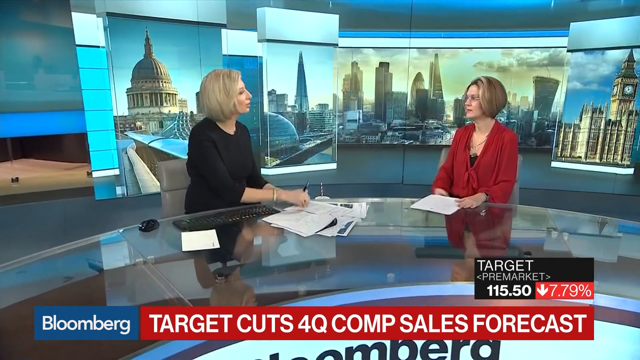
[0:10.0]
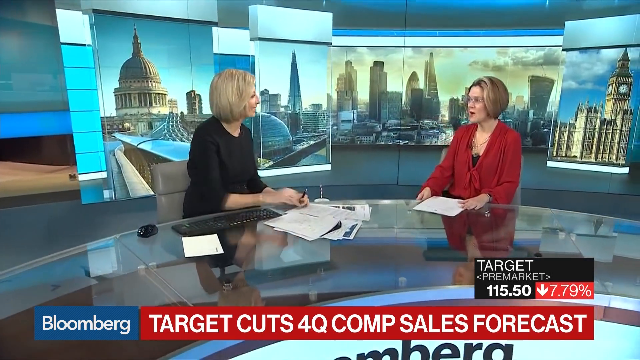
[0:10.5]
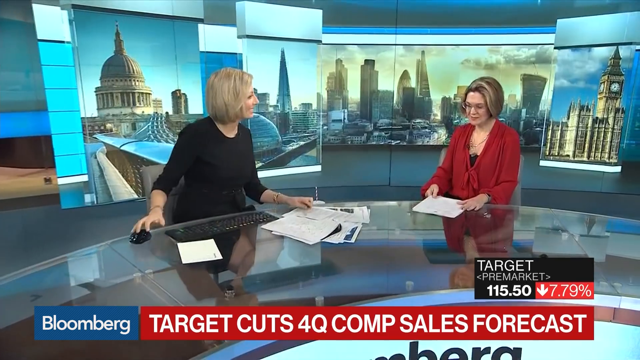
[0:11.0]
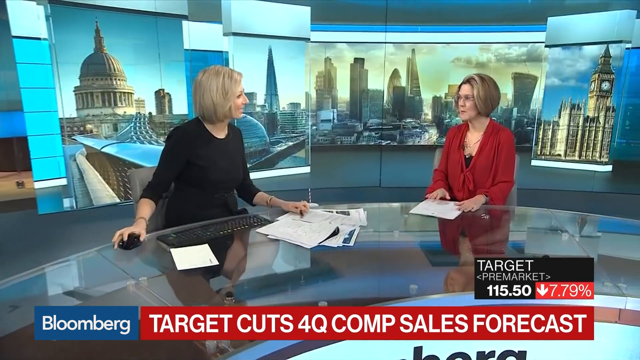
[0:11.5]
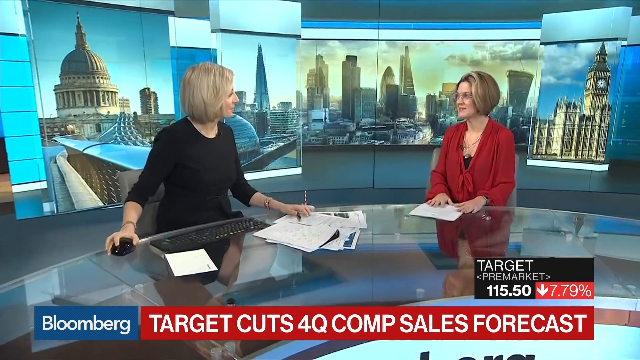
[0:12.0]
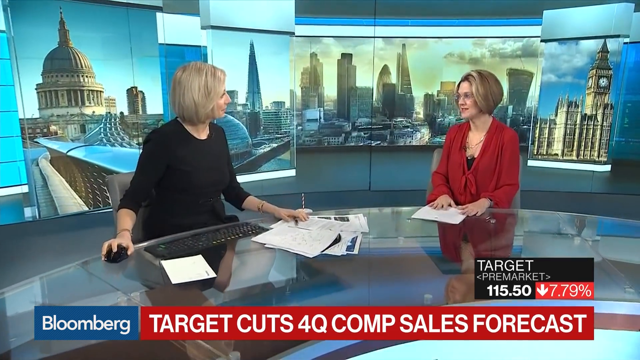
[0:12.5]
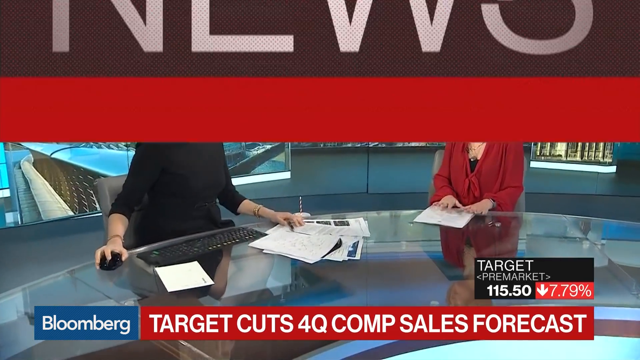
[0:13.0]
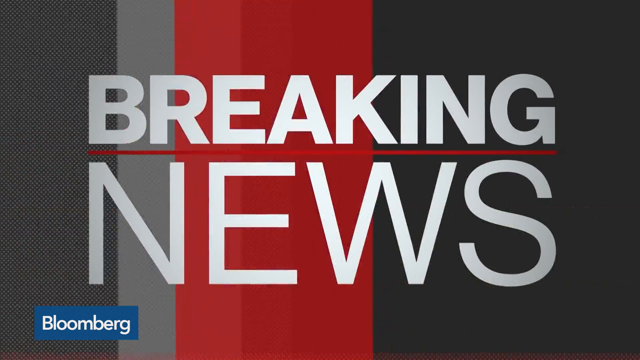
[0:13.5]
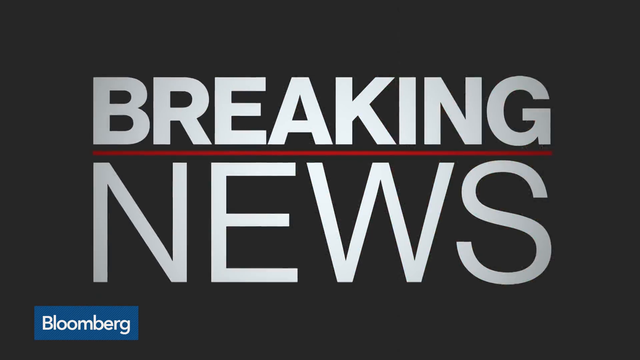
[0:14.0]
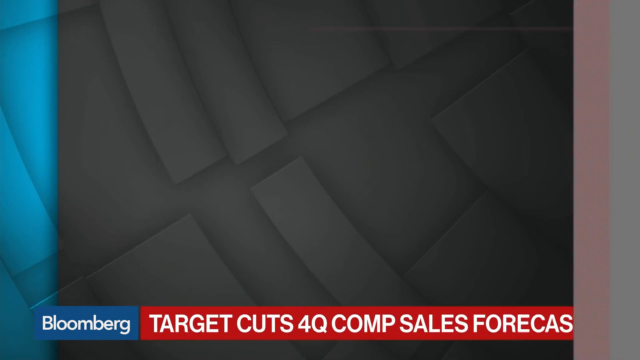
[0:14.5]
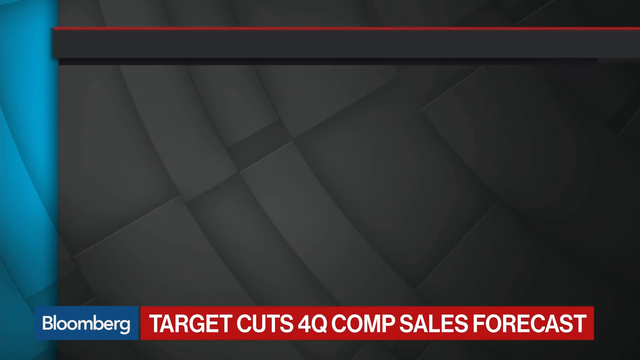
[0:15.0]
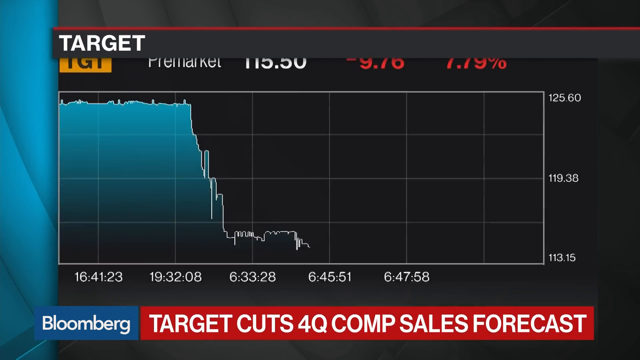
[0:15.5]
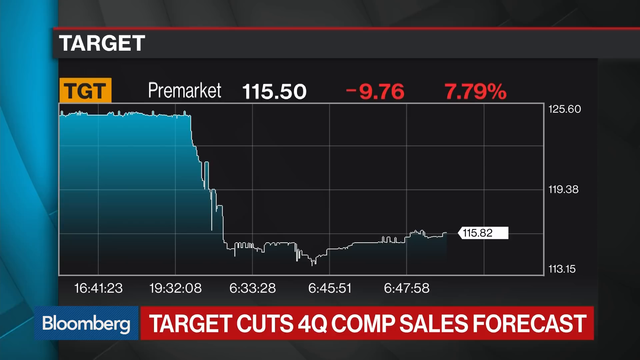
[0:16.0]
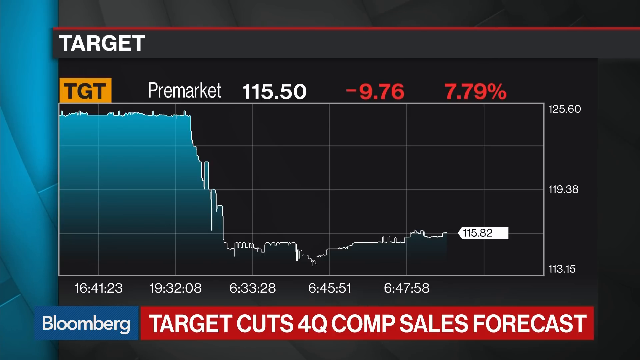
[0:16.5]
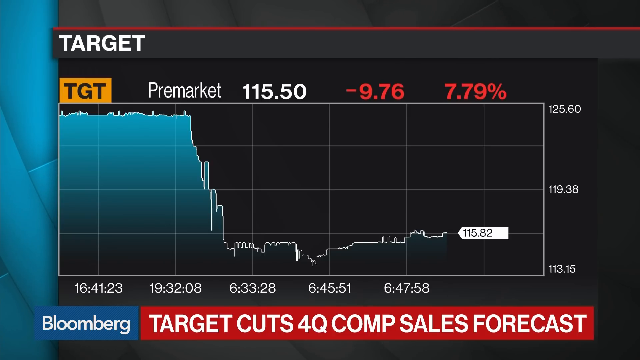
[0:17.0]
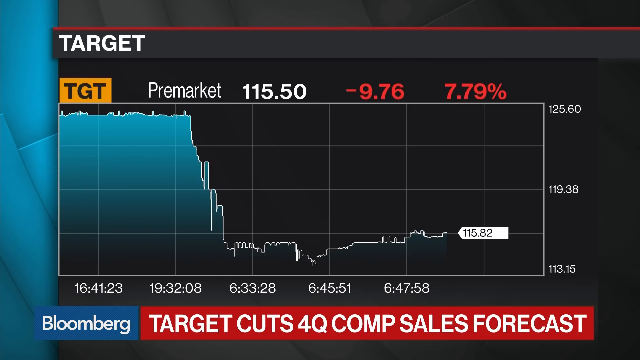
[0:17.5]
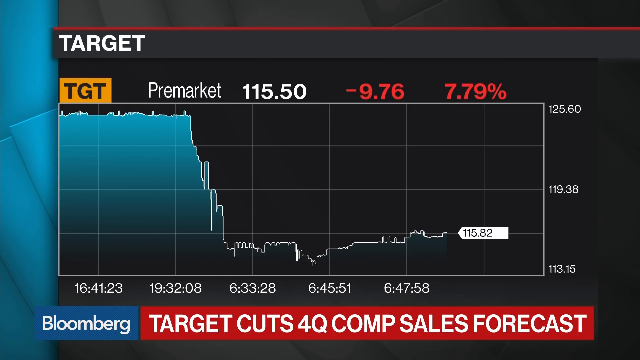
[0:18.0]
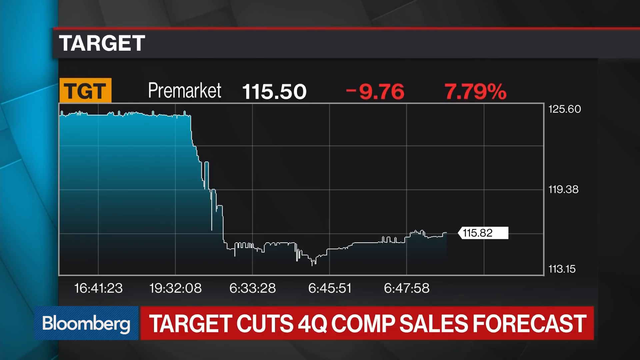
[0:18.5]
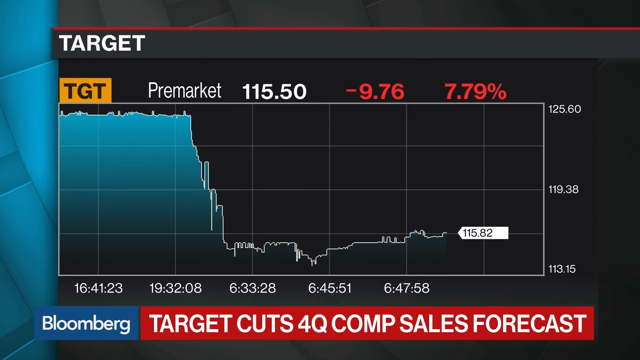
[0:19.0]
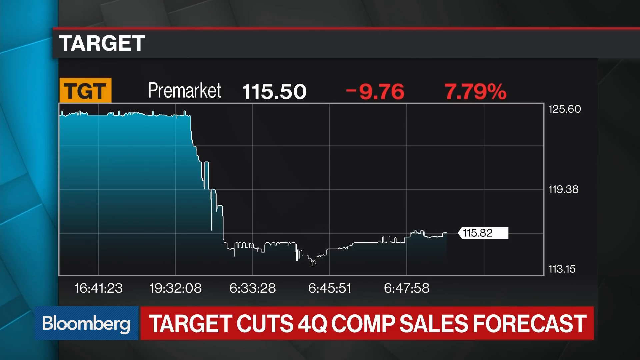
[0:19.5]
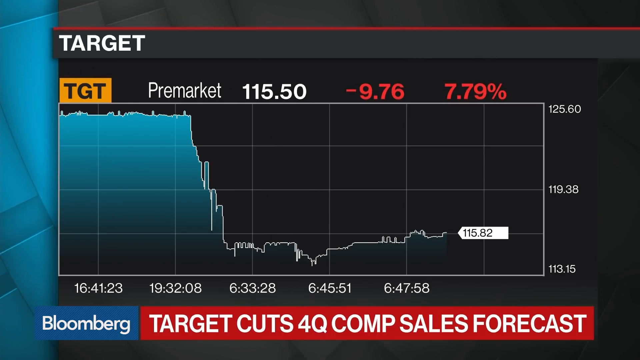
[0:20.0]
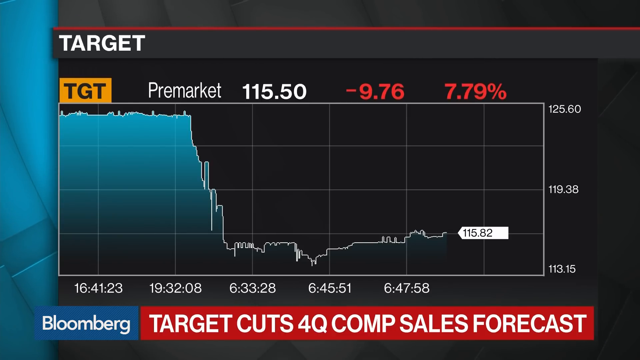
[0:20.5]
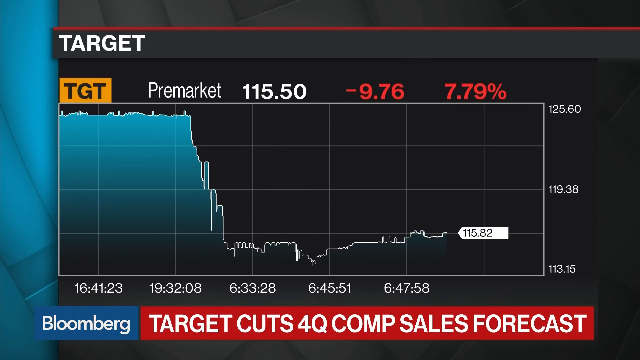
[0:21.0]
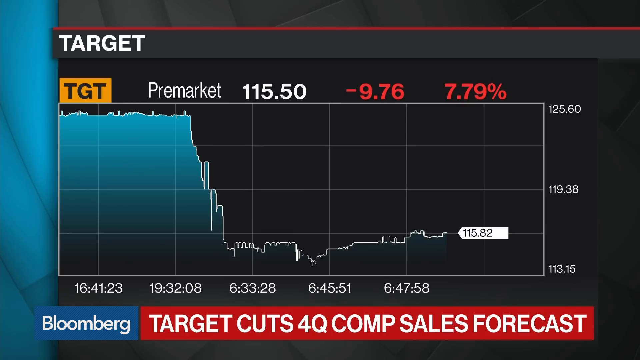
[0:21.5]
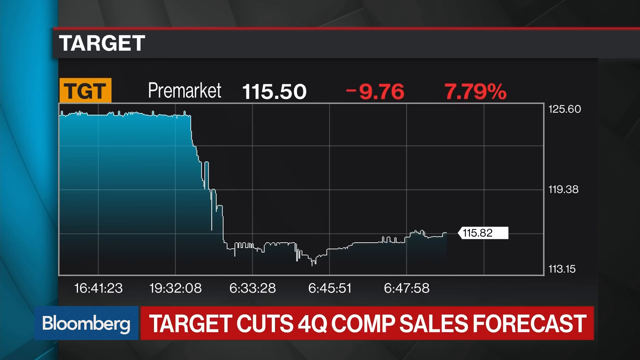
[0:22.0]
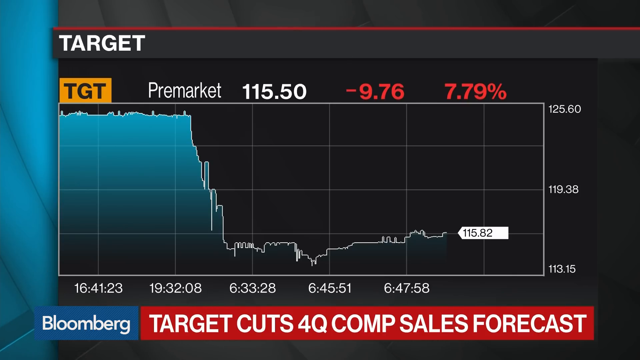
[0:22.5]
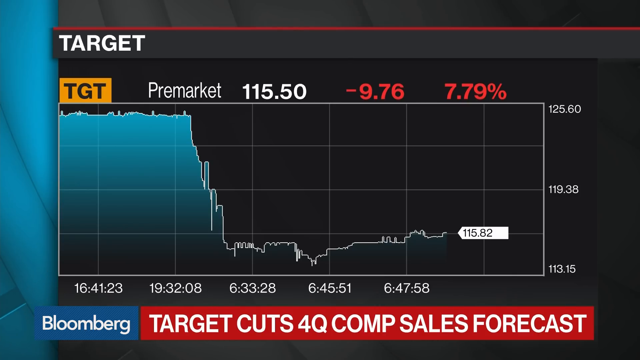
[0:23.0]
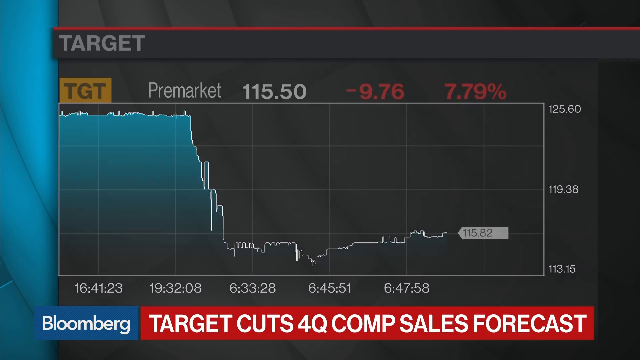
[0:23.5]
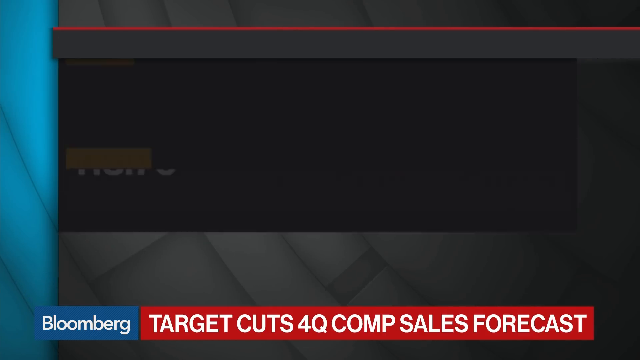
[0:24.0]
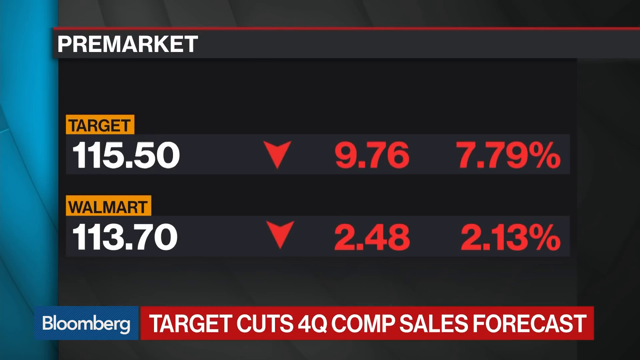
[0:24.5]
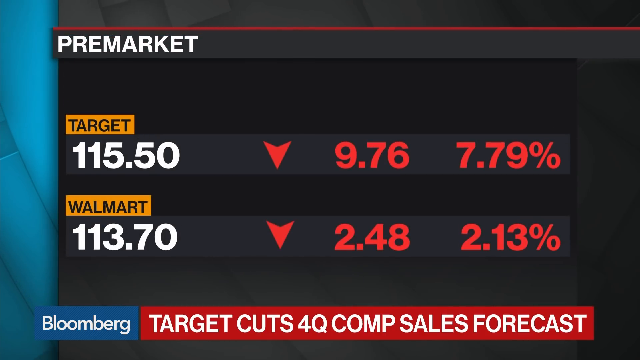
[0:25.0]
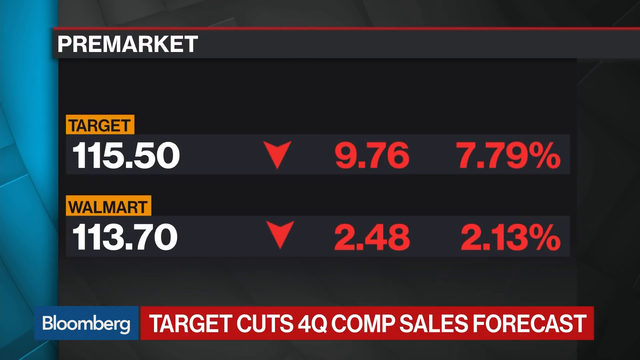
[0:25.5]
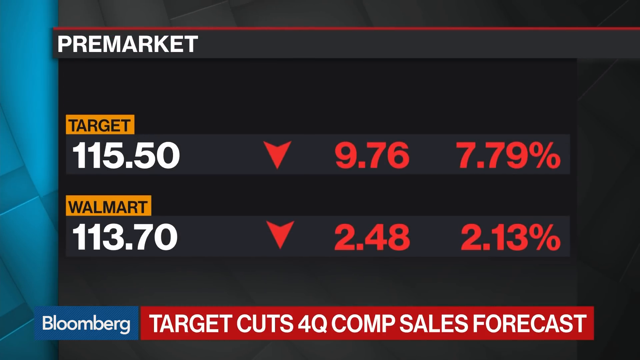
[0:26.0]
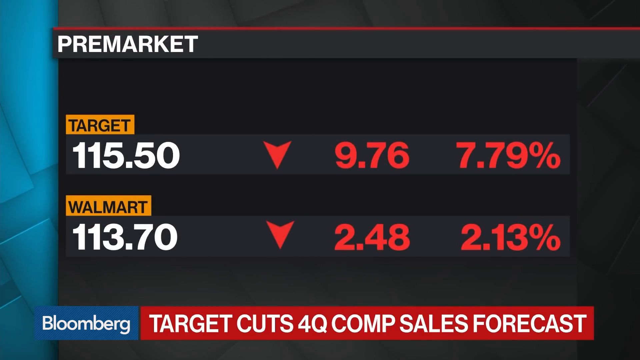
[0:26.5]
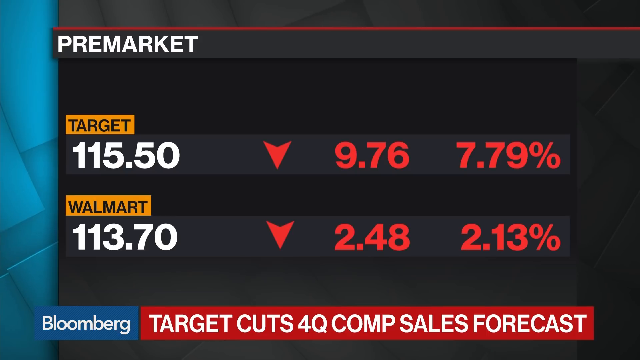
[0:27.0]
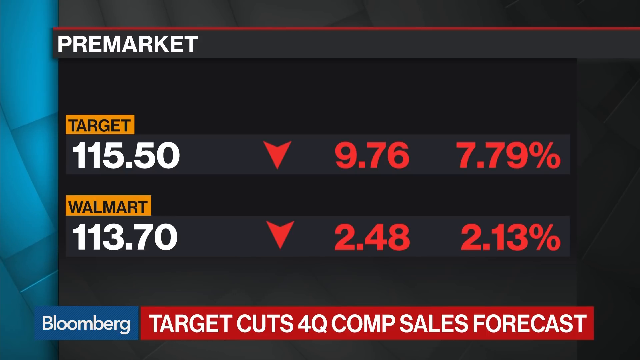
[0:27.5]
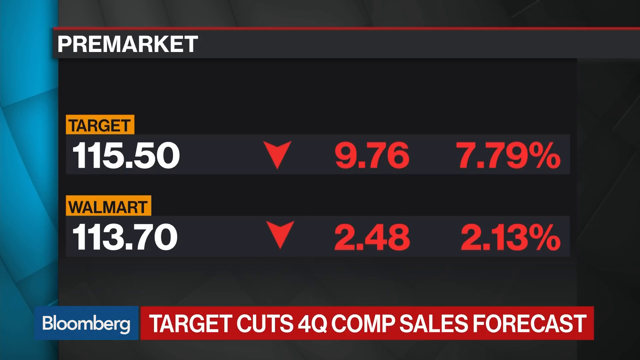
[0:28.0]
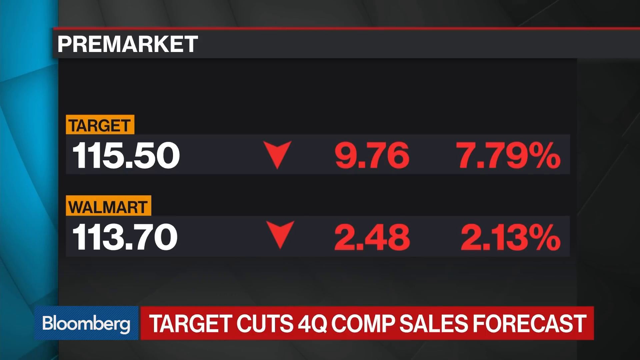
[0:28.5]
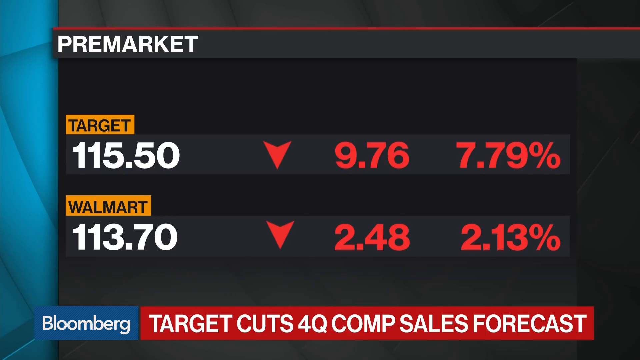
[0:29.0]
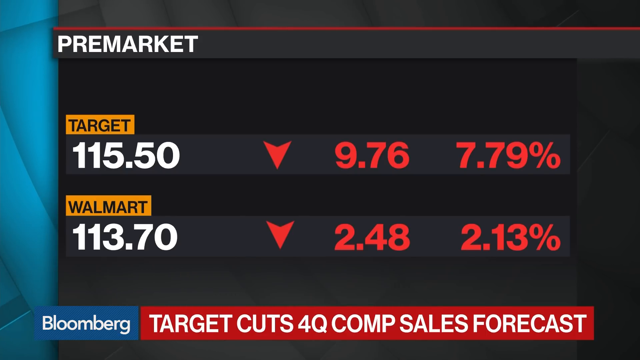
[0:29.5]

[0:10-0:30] Inside a news studio, two women sit at an arch-shaped table, each with papers on the table in front of her. The news host on the left wears a black dress, and a computer keyboard is embedded in the table in front of her. She looks to her side at a guest in a red blouse, who is speaking. The picture changes to an image that says "Breaking News". The text goes away, and stock market information for Target appears, showing a loss for Target. The screen then changes: "pre-market" appears in the top left corner, and stock market information for both Target and Walmart is shown, with an arrow pointing down to show that the stock has dropped for both companies.